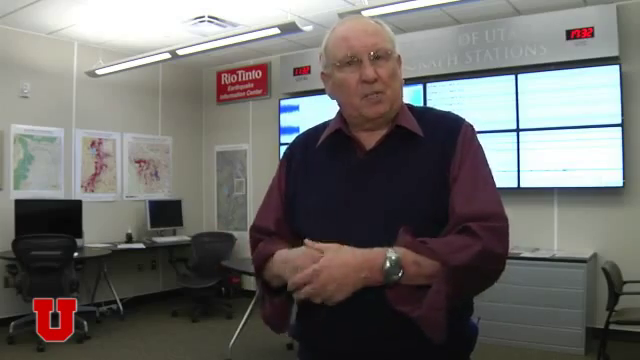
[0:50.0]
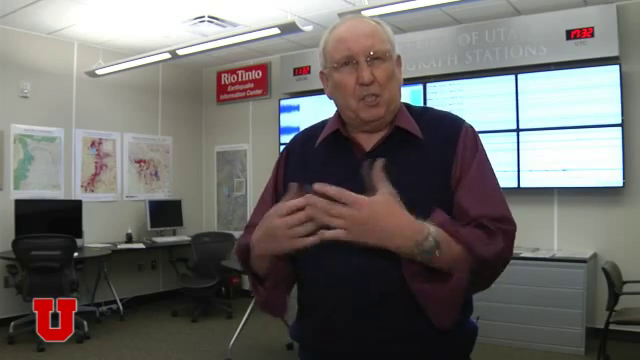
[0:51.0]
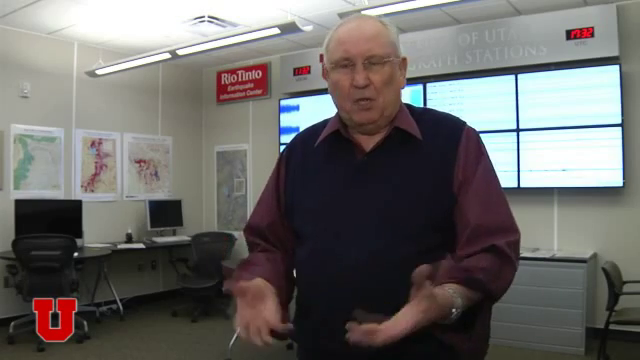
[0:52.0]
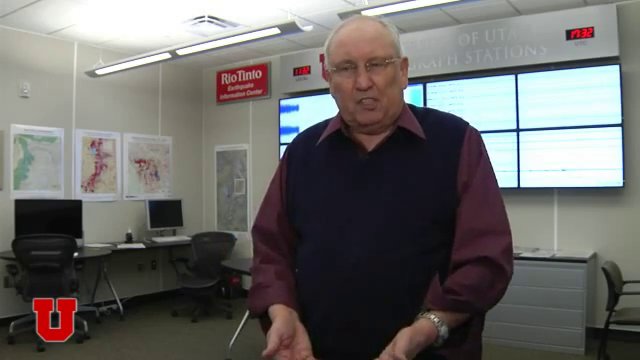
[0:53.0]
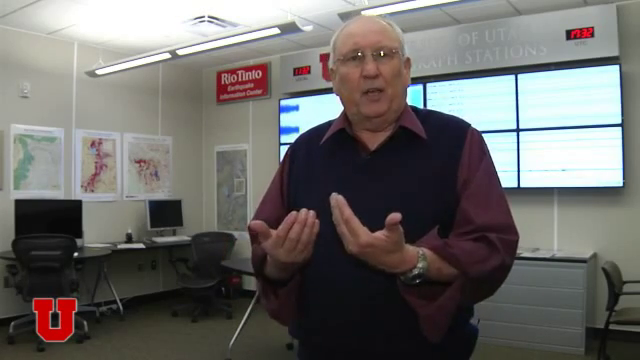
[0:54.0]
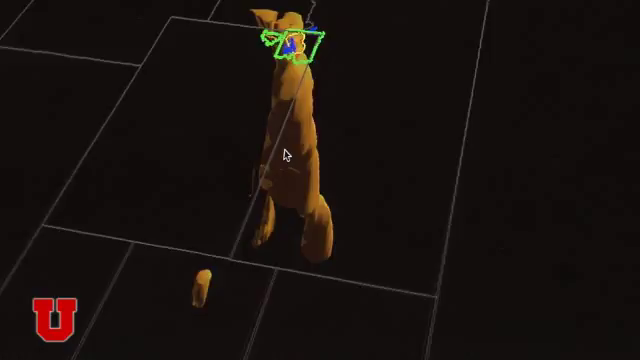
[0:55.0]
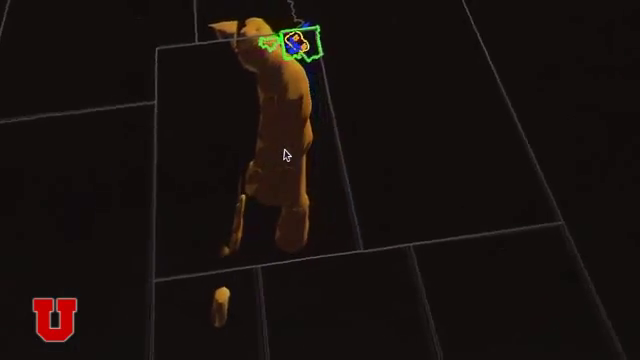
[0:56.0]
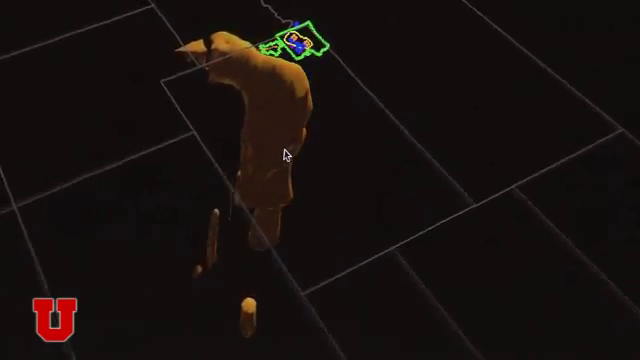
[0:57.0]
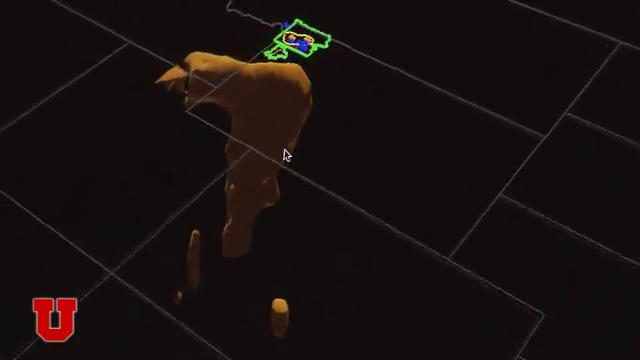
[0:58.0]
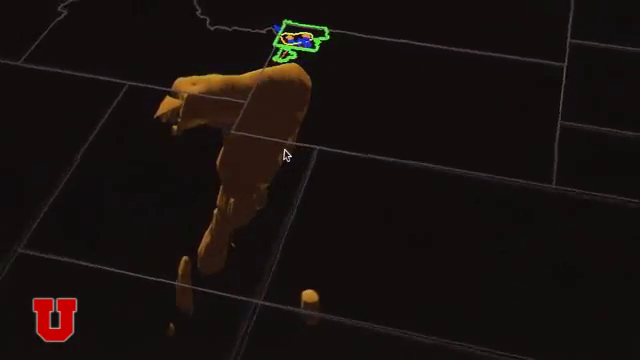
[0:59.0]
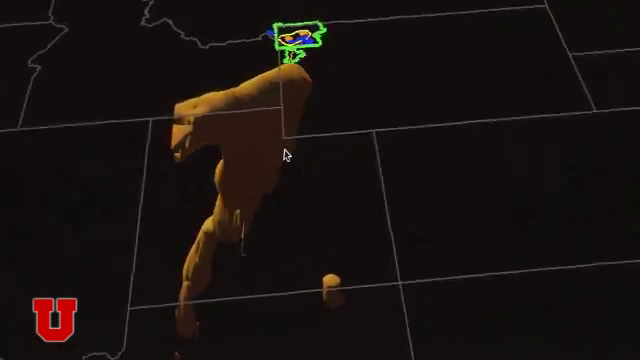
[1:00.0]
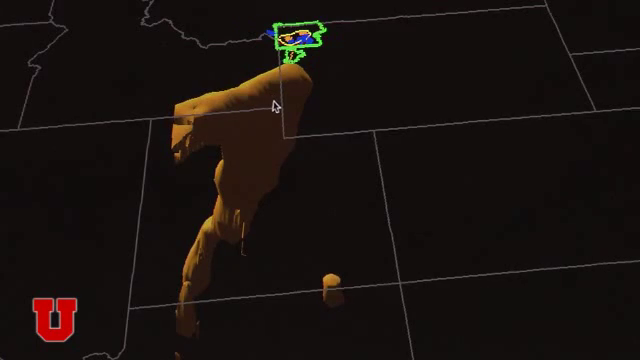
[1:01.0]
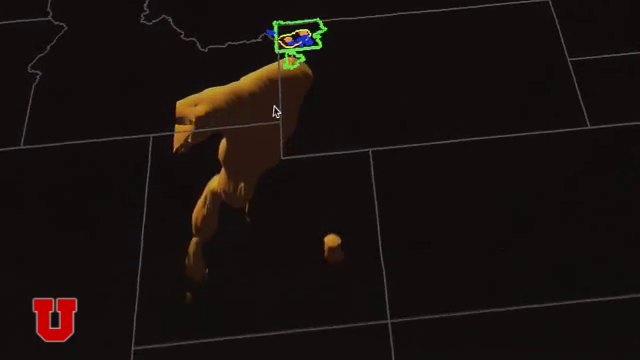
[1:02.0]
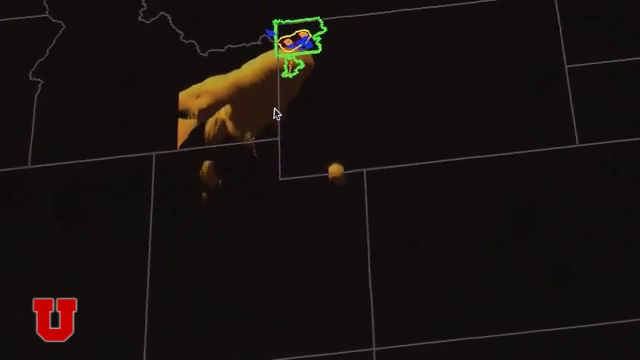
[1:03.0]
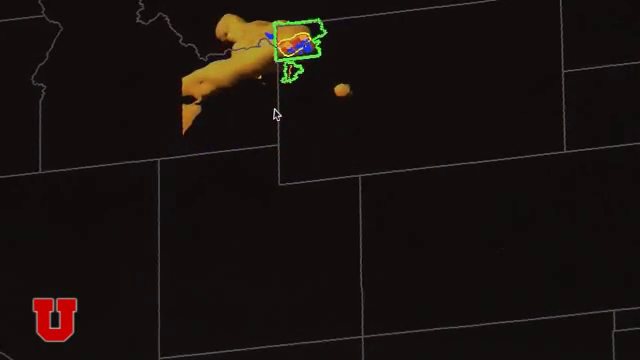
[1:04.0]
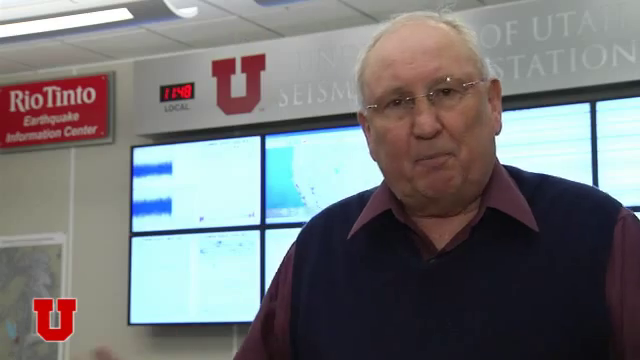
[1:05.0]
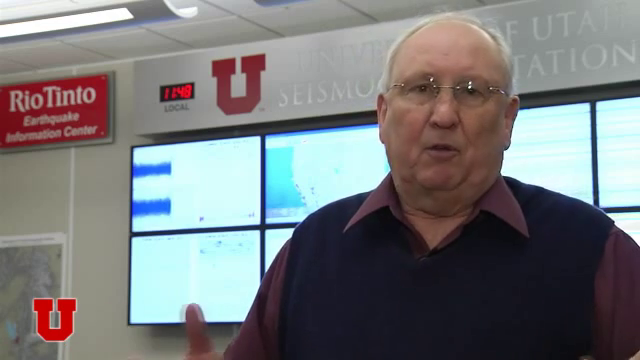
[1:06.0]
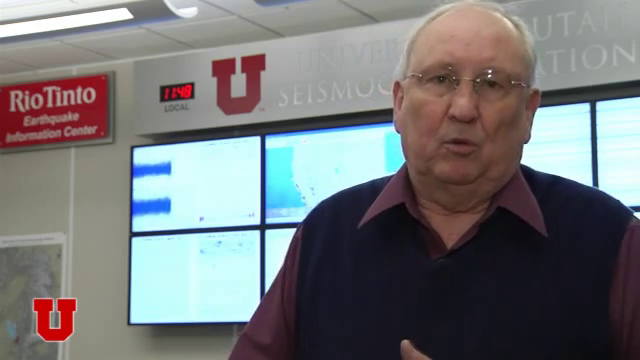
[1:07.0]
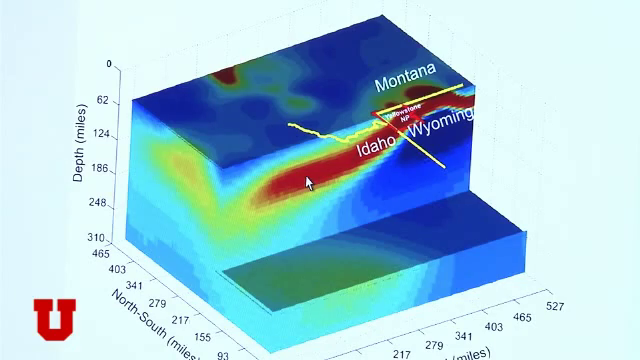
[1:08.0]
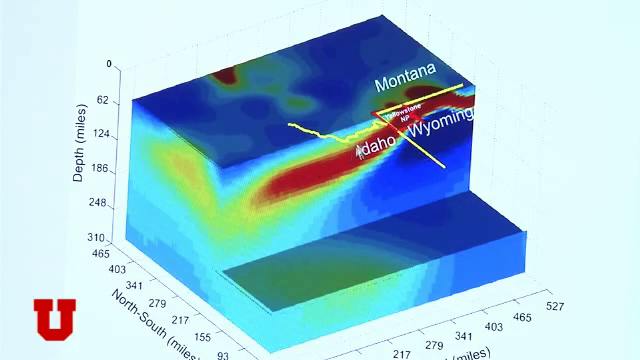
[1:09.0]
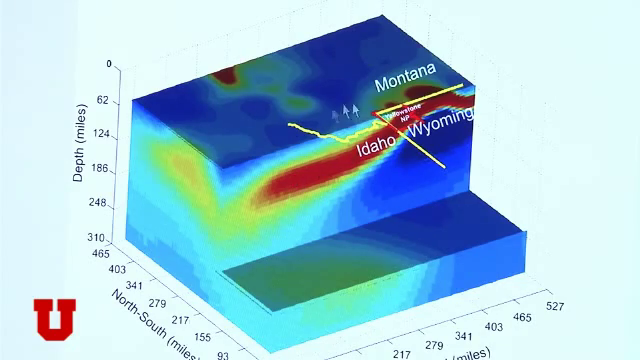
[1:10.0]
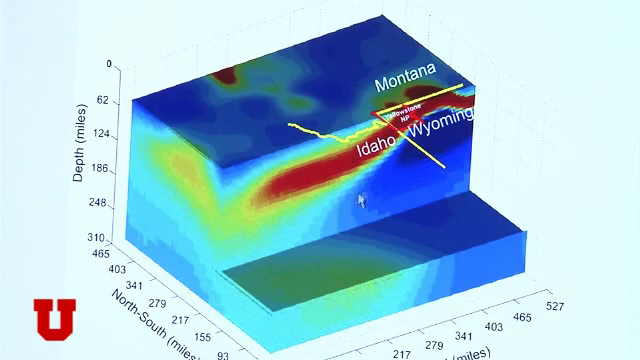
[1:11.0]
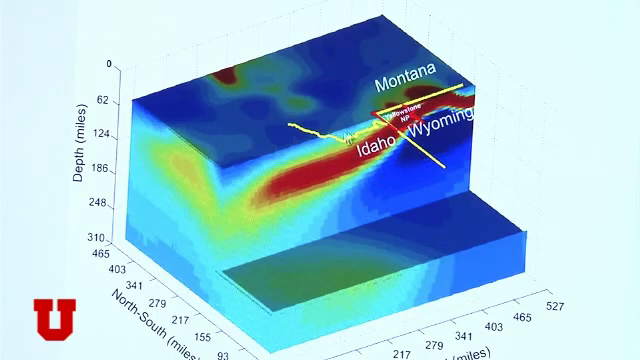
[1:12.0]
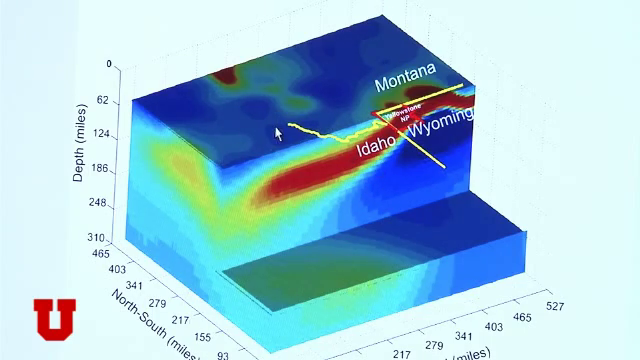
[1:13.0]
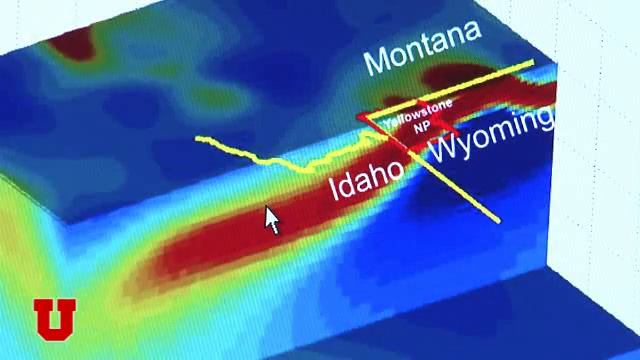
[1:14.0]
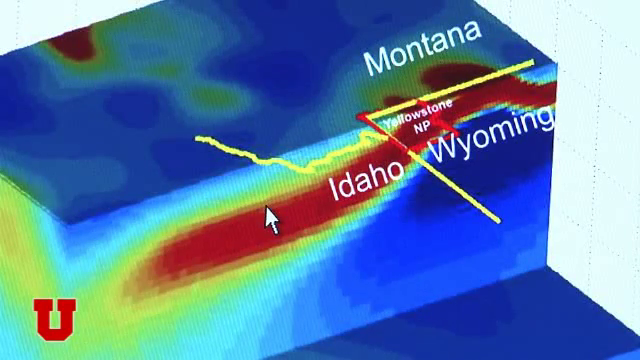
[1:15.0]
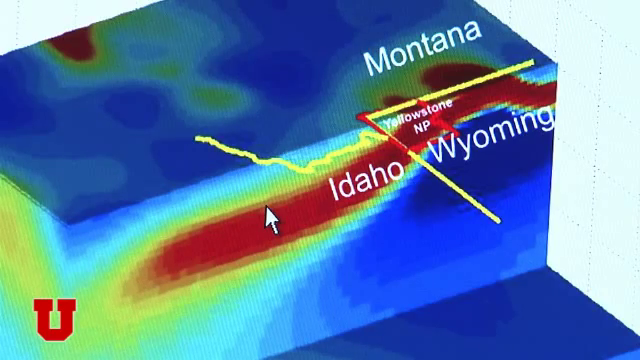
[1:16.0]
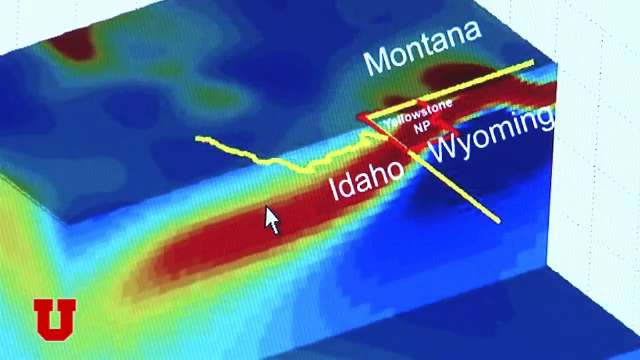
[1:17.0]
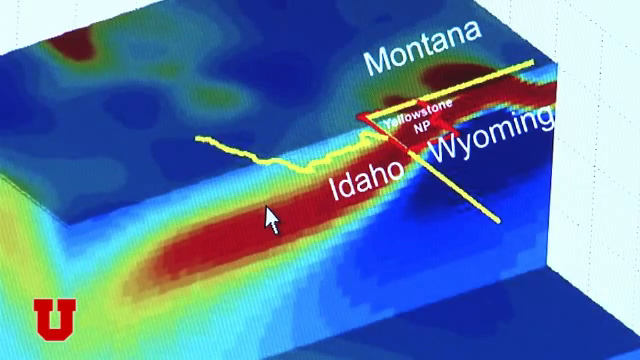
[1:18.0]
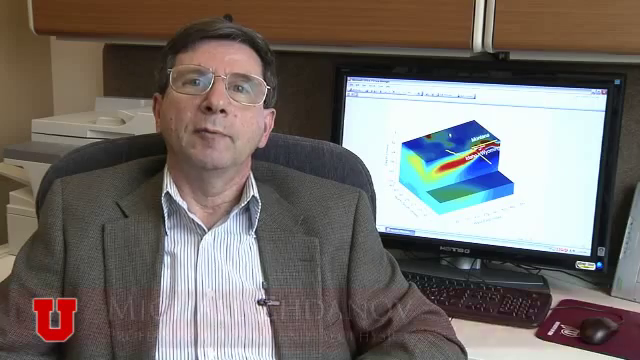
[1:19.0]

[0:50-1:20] Mr. Smith appears to be giving a lecture. Another map, presumably a topography map, is shown, and at one point it switches to a topography map showing Montana, Wyoming and Idaho, where Yellowstone is located, with the cursor swinging around. Another map that looks like a topography map swirls around. At the very end, a man apparently named Michael Z. is introduced and seen only briefly.